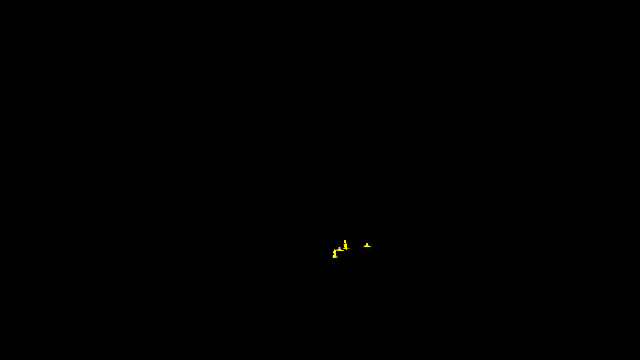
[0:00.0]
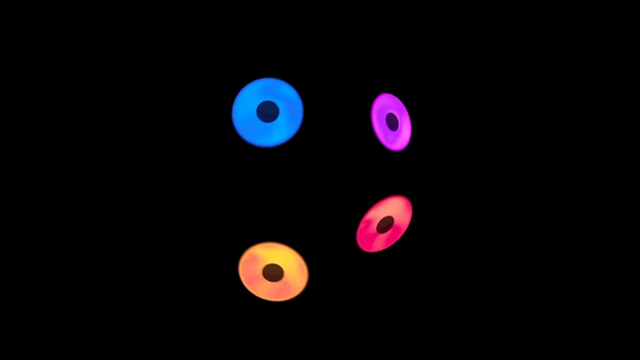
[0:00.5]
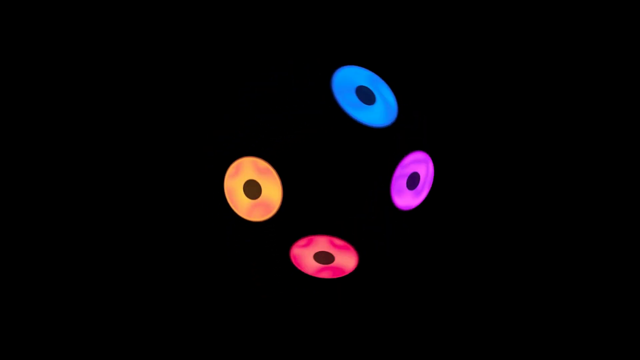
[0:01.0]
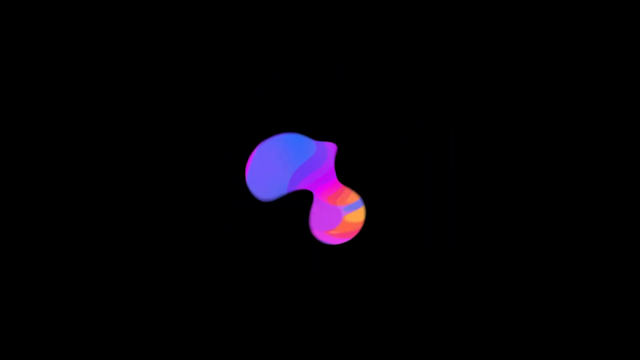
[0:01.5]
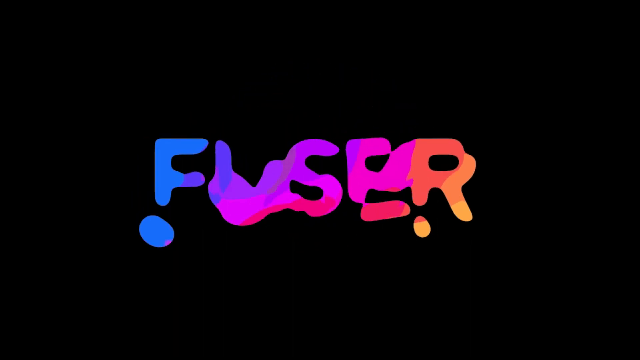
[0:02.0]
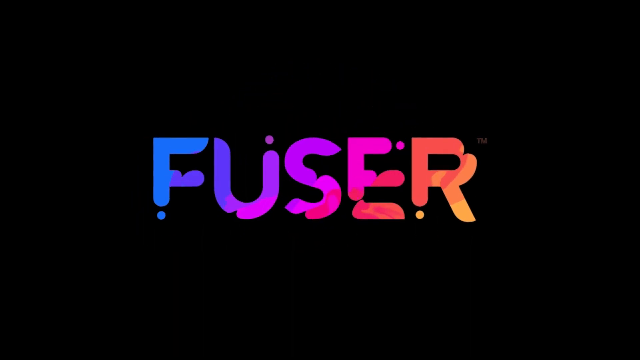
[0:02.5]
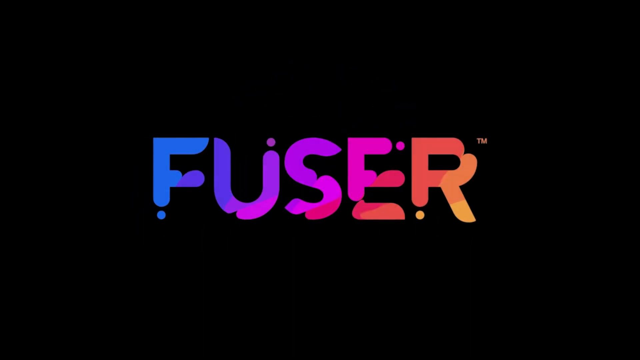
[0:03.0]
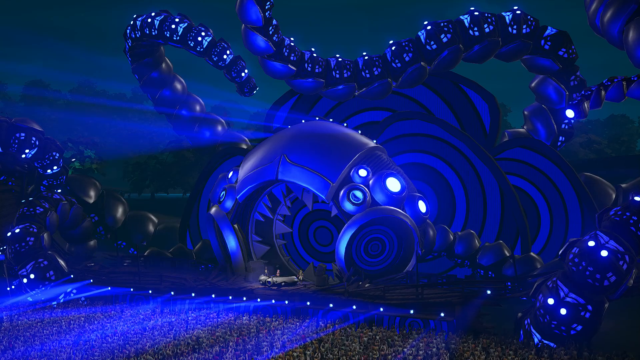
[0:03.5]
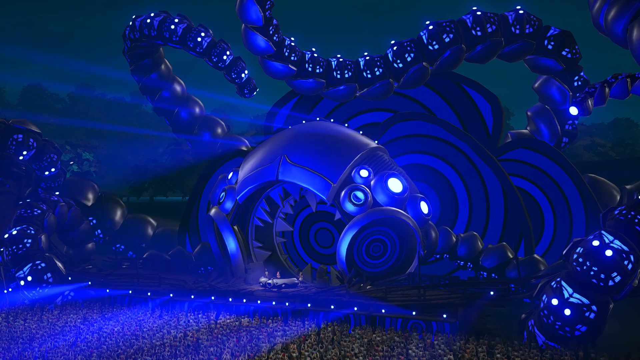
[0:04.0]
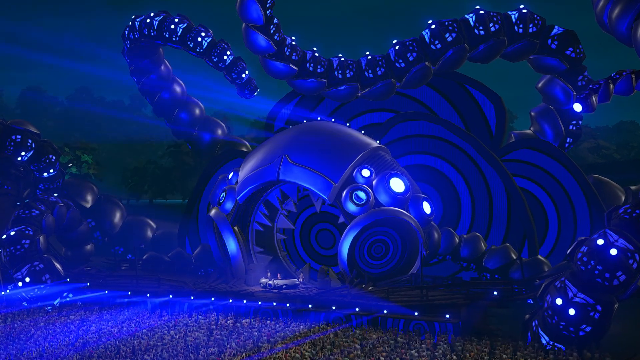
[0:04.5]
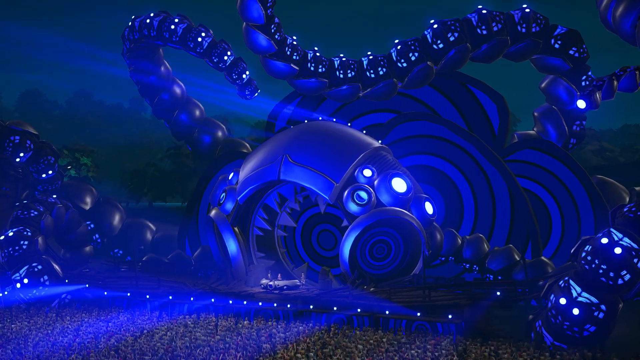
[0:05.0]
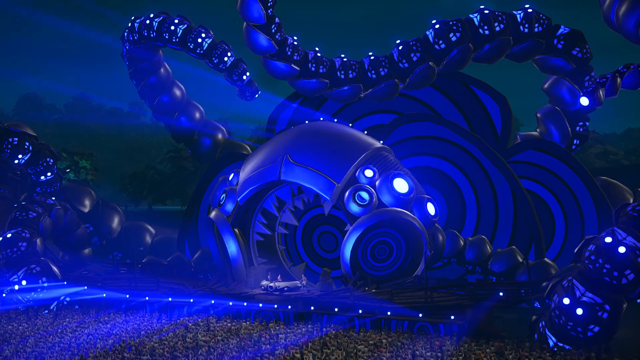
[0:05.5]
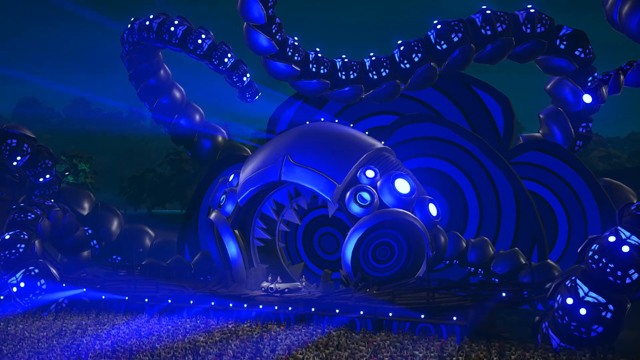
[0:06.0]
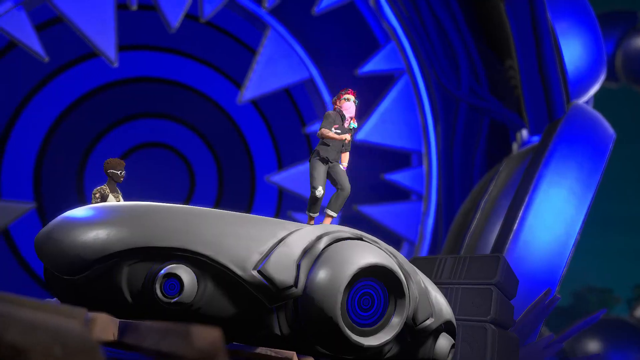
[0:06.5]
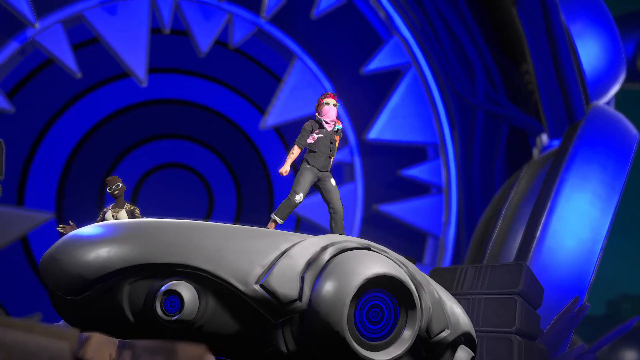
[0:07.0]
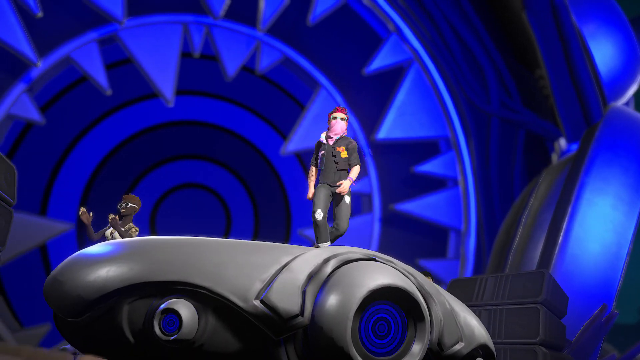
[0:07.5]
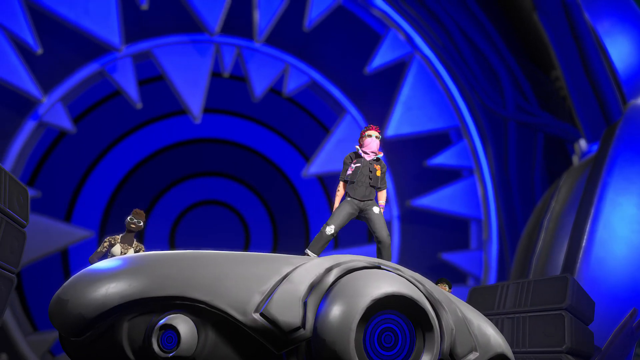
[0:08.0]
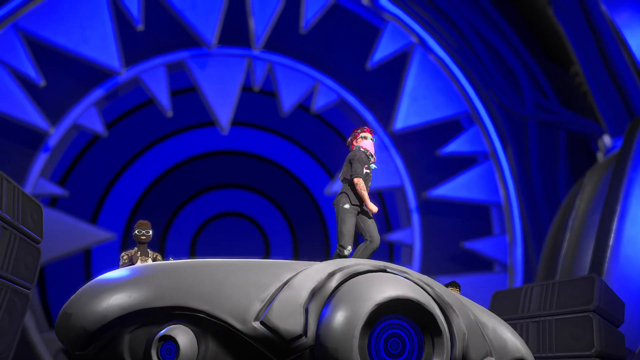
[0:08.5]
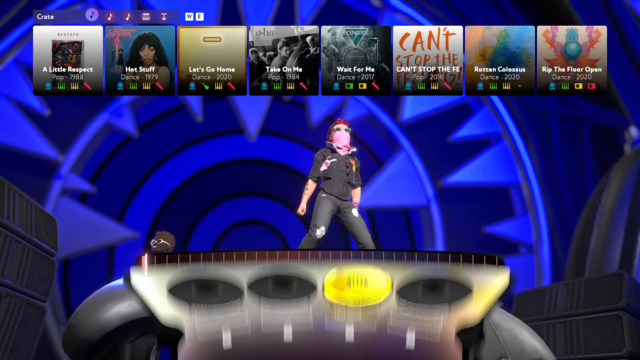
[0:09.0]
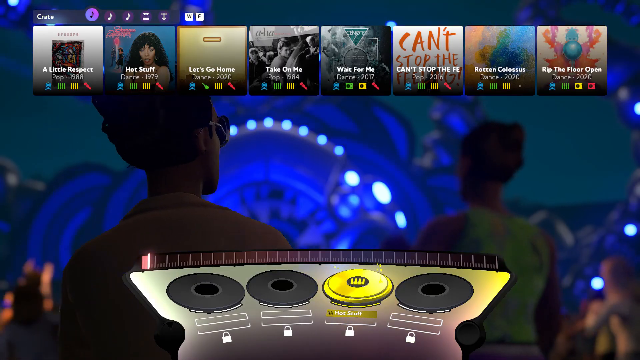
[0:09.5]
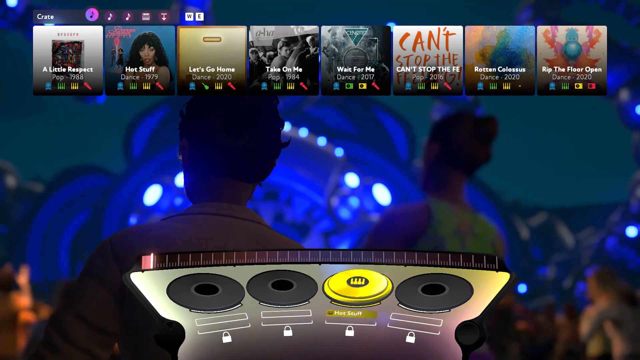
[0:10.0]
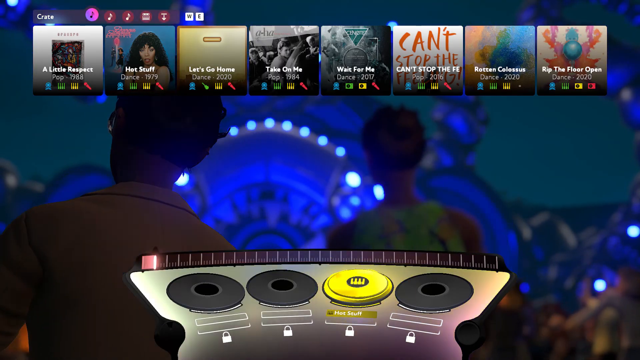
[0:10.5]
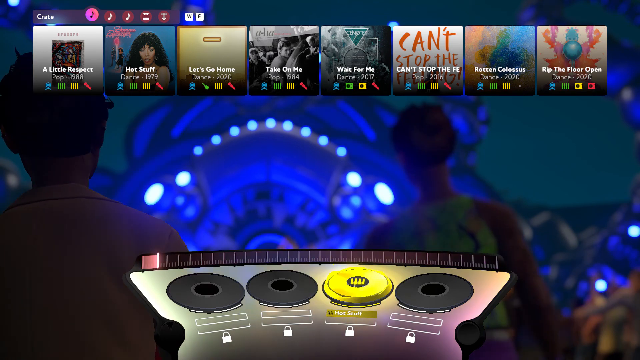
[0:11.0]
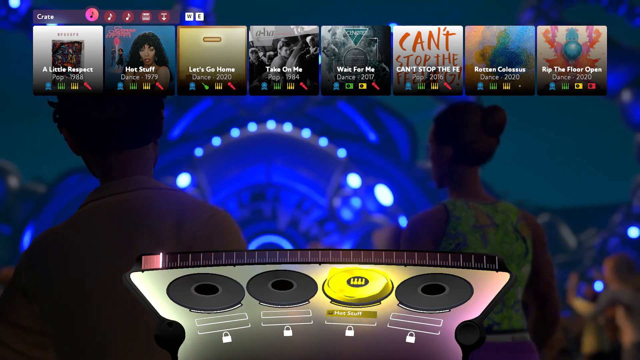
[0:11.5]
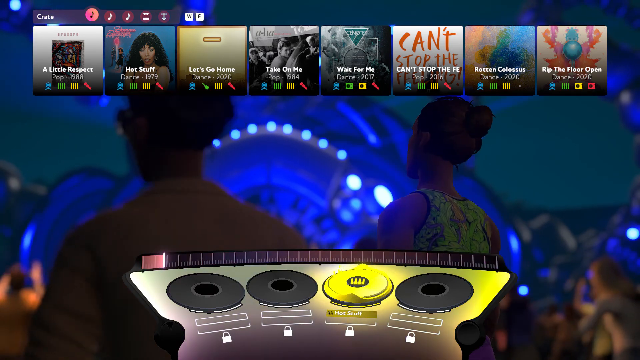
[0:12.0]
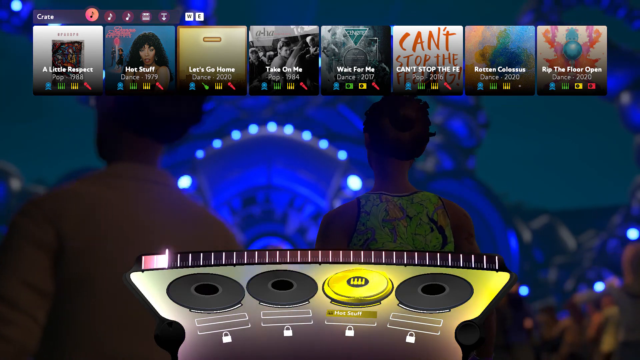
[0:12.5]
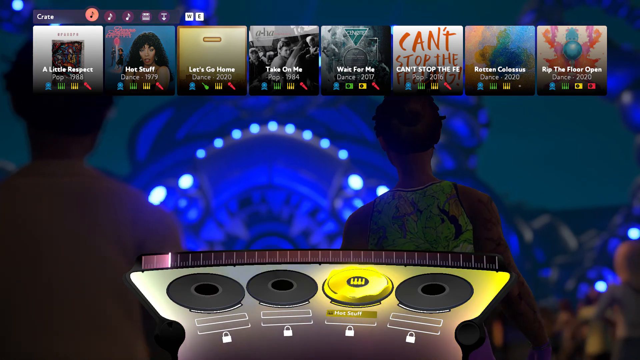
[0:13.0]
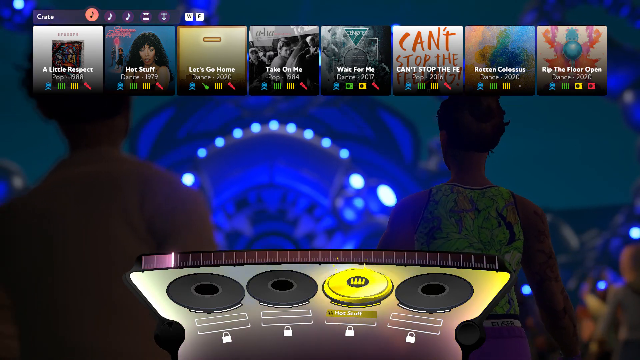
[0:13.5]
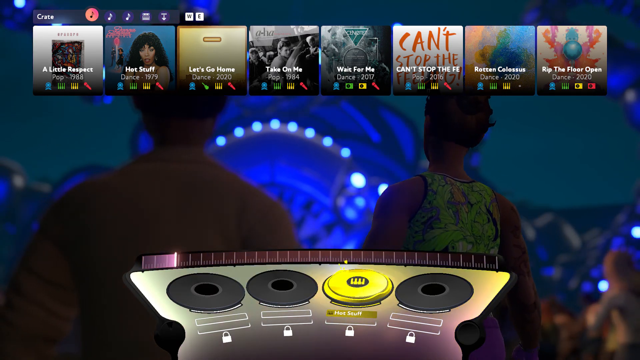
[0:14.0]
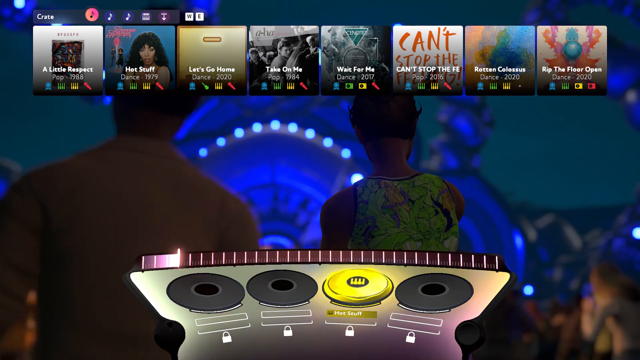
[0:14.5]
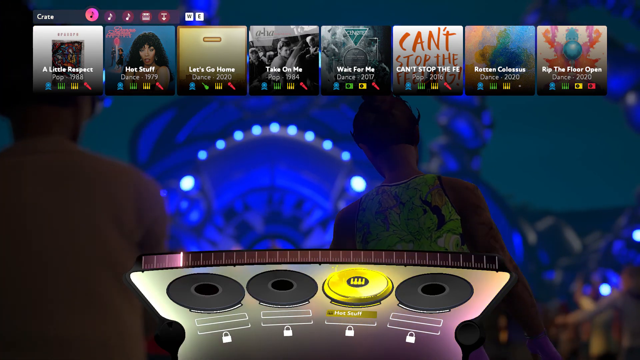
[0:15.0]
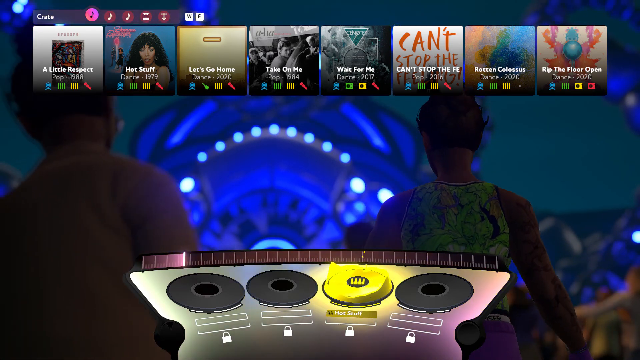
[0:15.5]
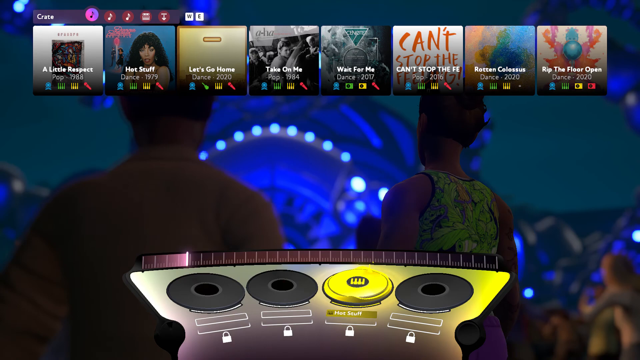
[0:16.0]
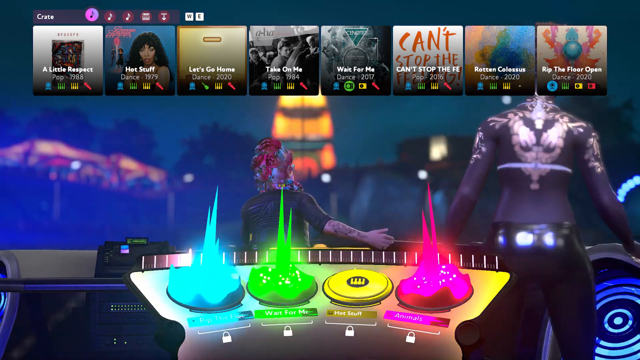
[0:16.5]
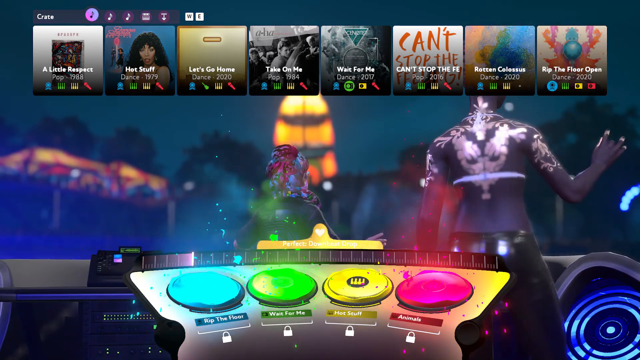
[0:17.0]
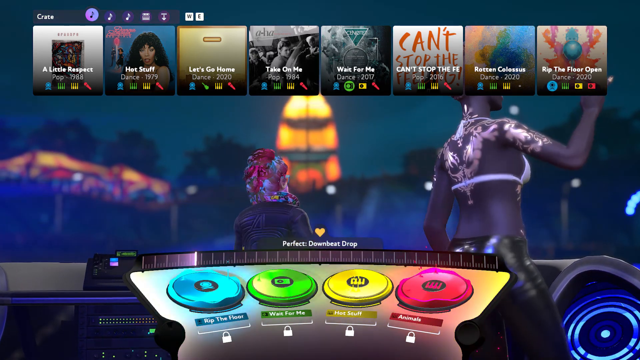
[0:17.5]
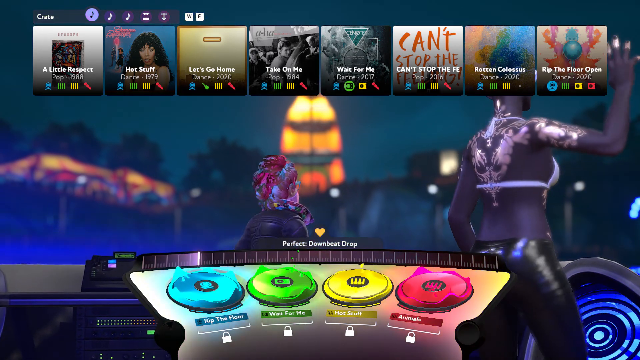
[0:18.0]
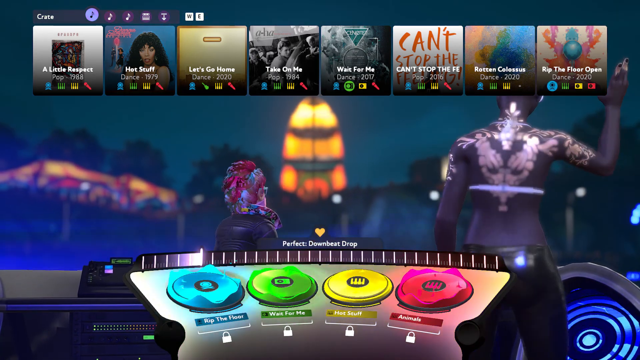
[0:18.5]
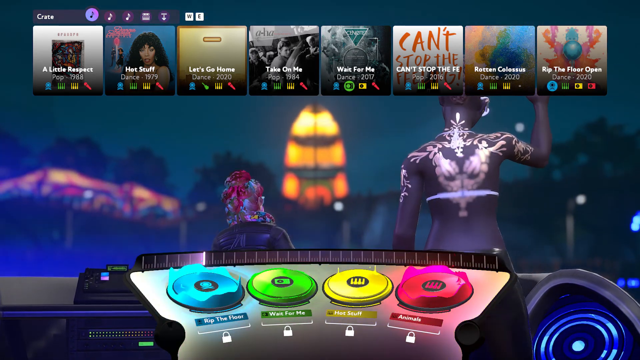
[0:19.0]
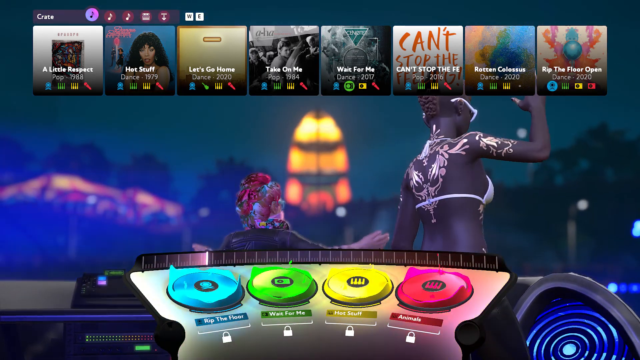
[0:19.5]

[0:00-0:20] The video opens on a mostly black background where three or four little yellow or green lights appear, followed by different colors and a fuchsia F-U-S-E-R. People are then shown dancing, and song titles appear on screen, including "a little respect", "take on me" and one beginning "can't stop the", probably followed by "feeling". It looks like dance content. The main dancing character has an interesting red shade of hair, and it is a group of people.